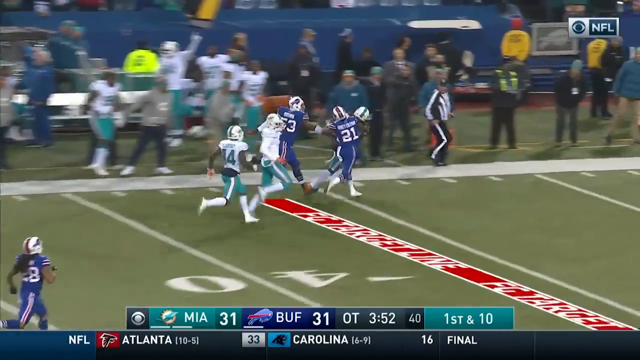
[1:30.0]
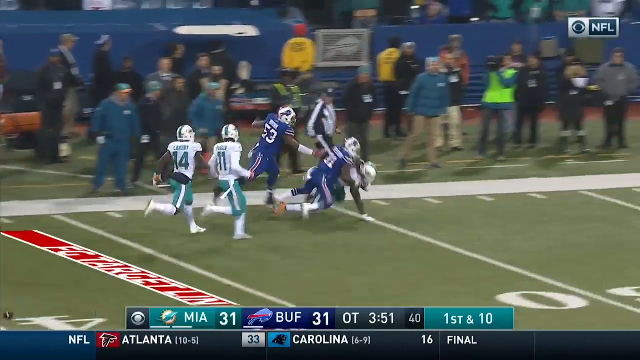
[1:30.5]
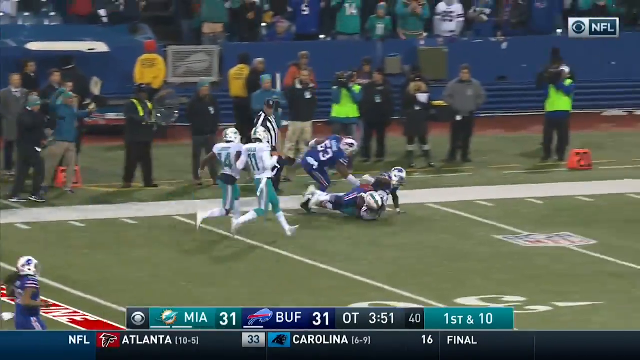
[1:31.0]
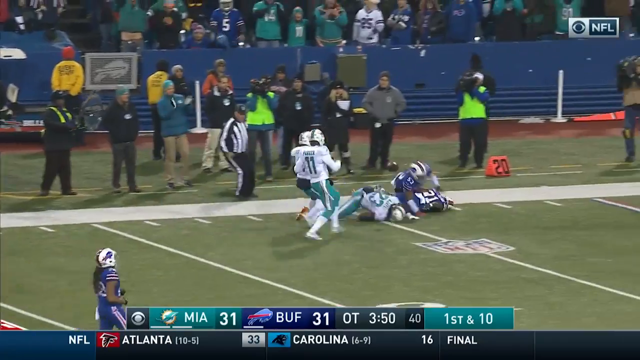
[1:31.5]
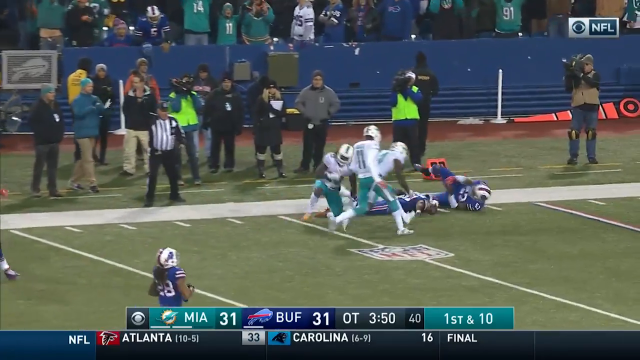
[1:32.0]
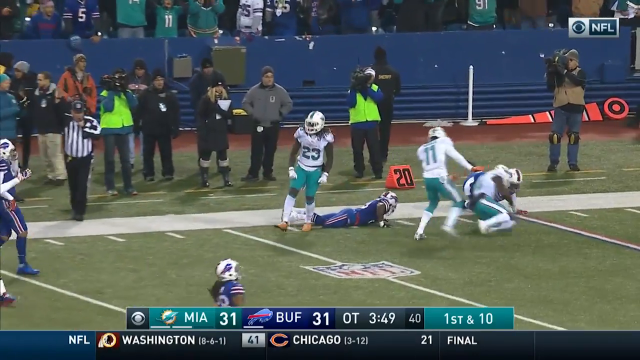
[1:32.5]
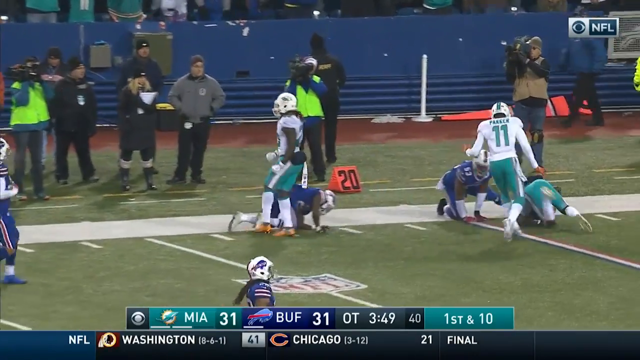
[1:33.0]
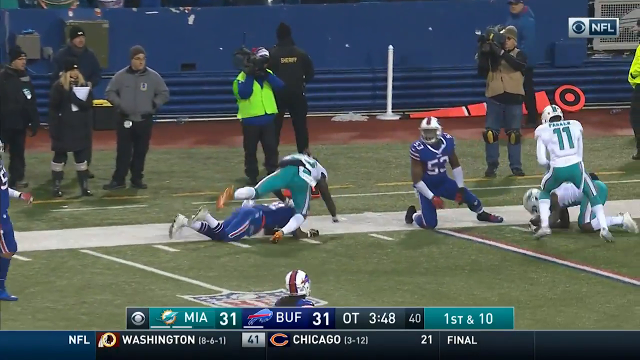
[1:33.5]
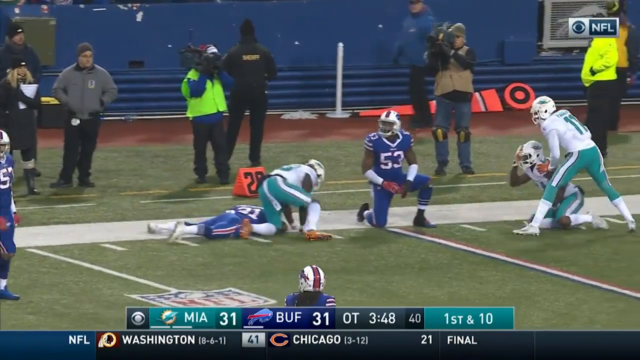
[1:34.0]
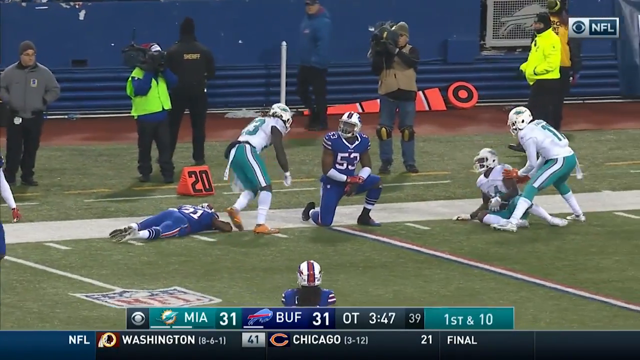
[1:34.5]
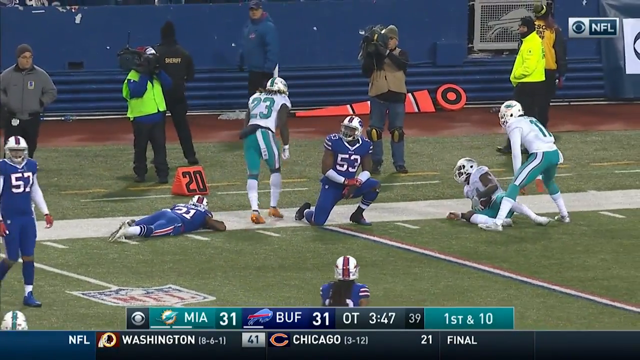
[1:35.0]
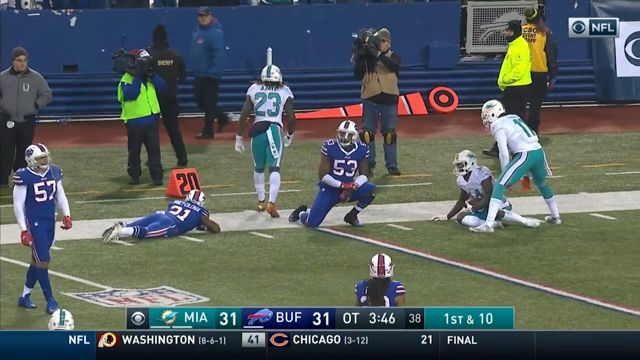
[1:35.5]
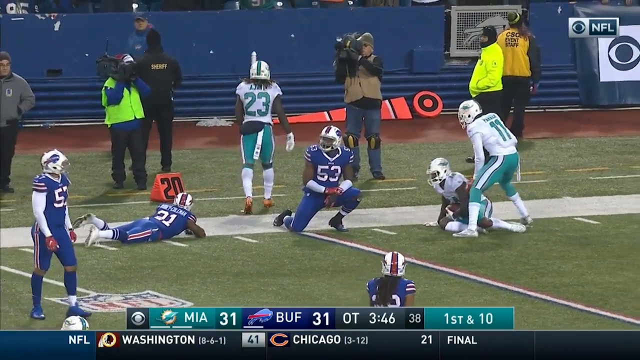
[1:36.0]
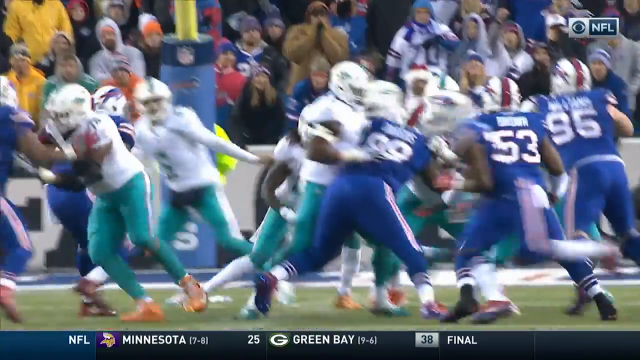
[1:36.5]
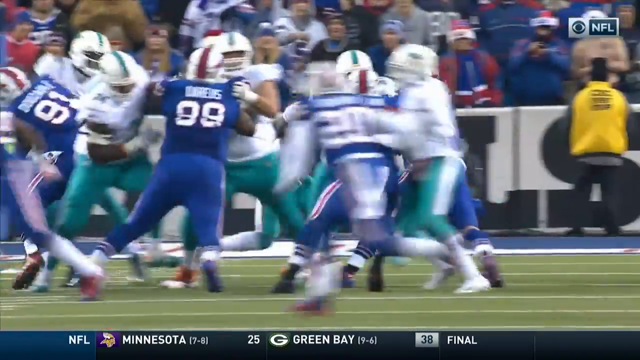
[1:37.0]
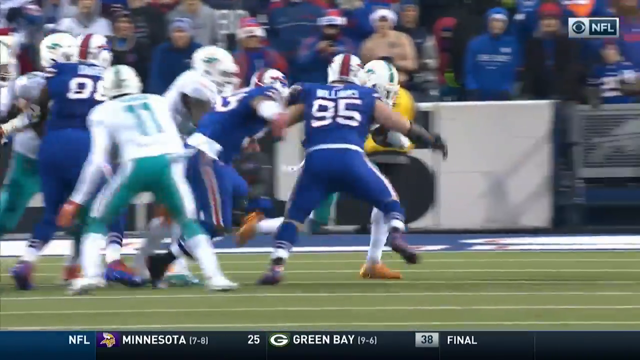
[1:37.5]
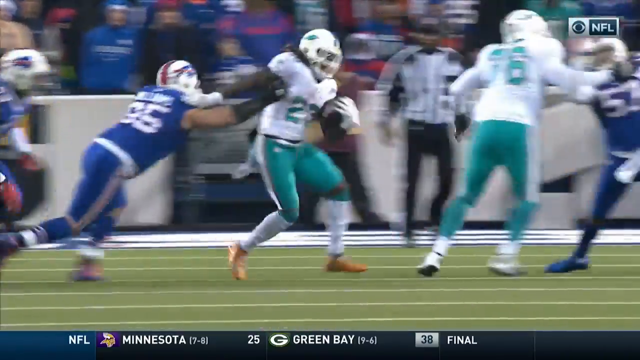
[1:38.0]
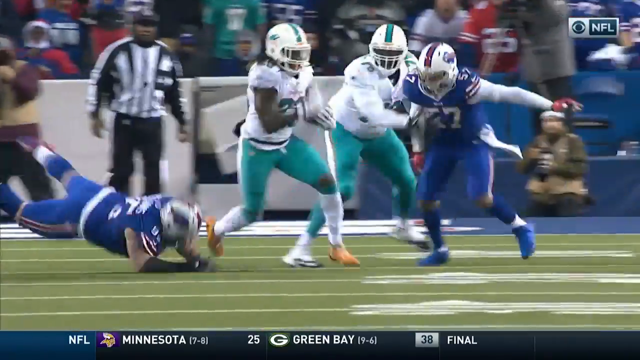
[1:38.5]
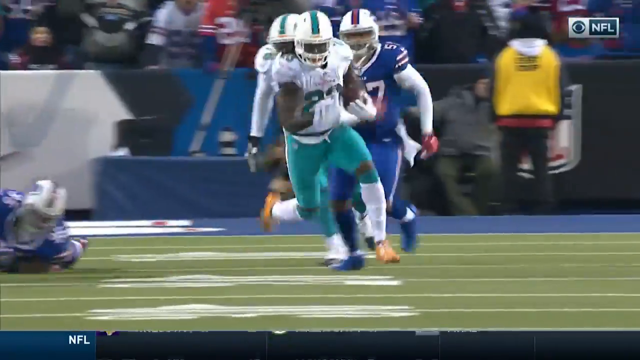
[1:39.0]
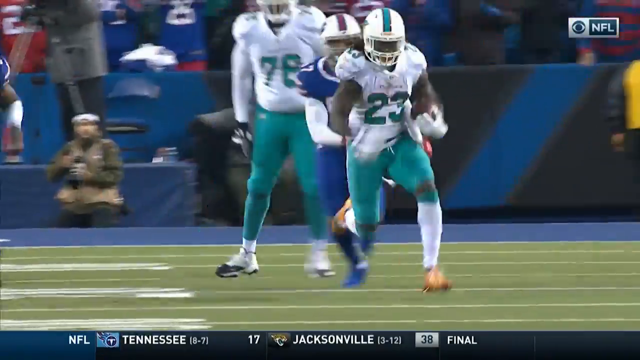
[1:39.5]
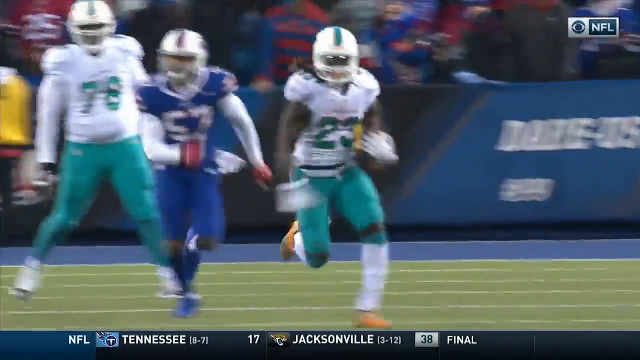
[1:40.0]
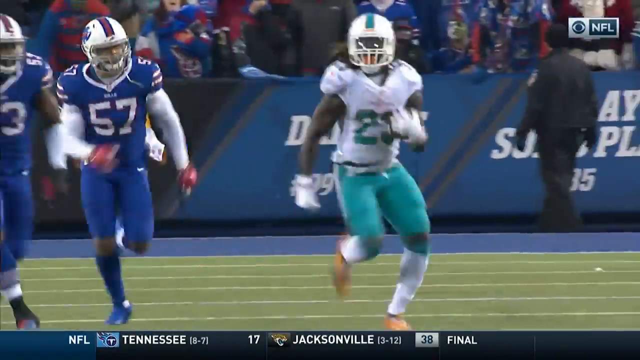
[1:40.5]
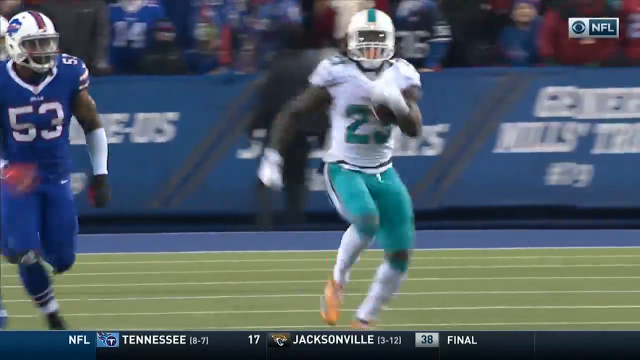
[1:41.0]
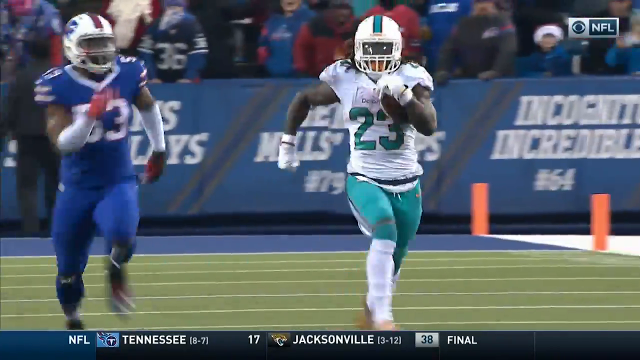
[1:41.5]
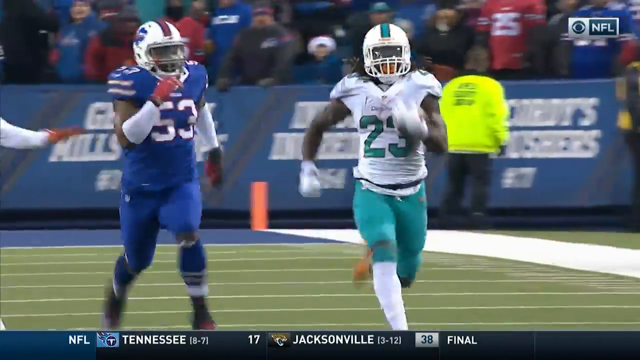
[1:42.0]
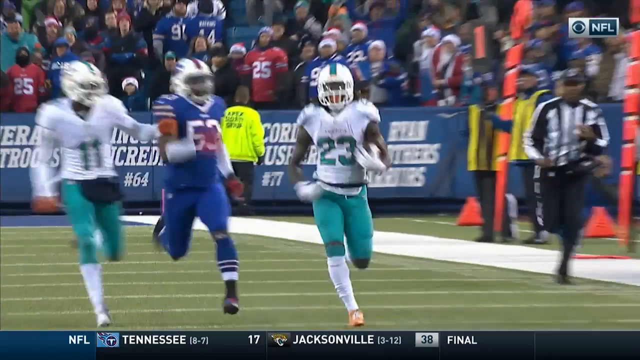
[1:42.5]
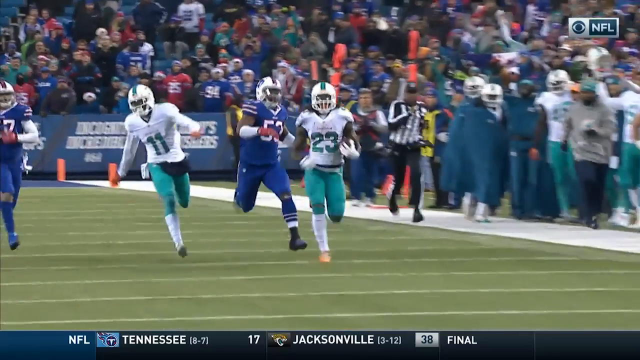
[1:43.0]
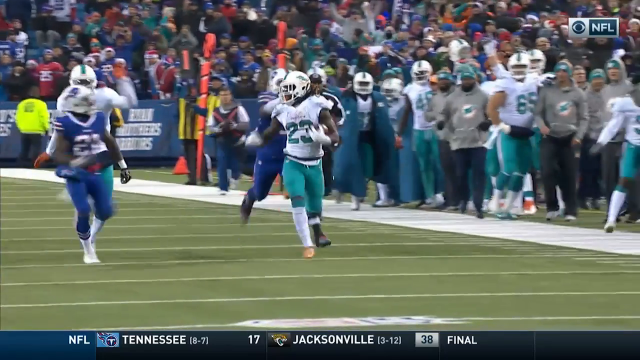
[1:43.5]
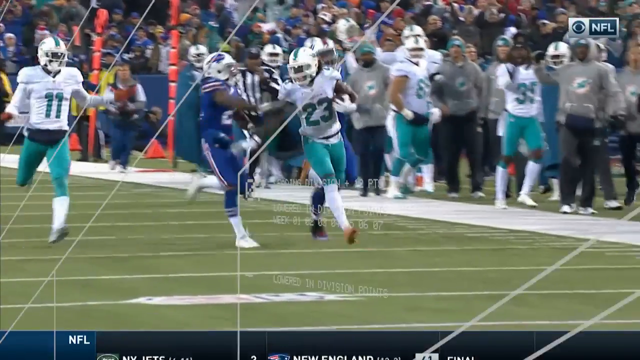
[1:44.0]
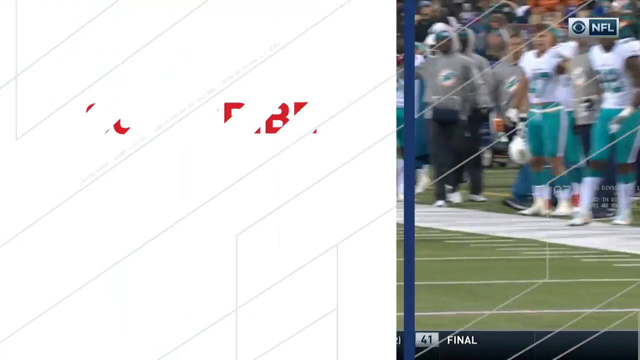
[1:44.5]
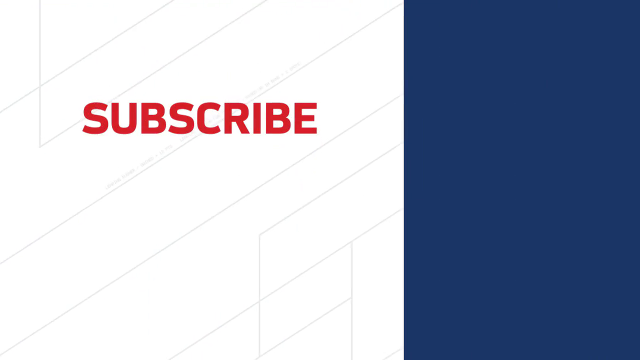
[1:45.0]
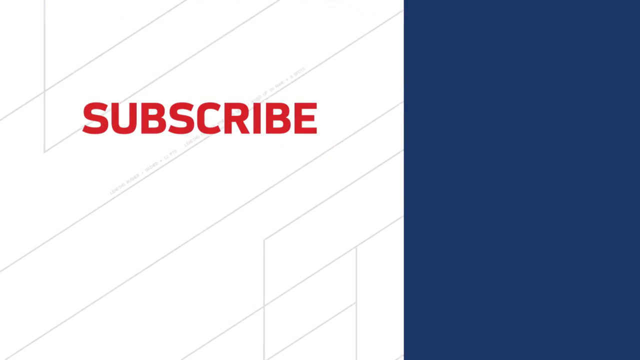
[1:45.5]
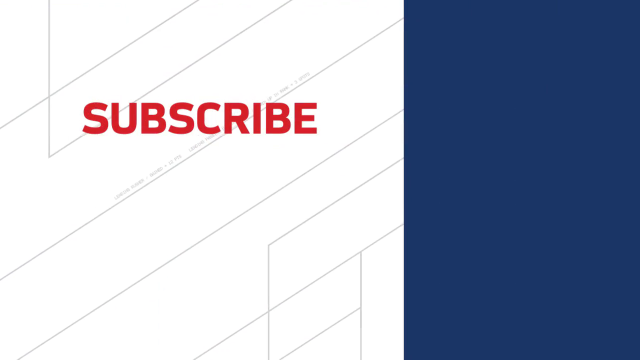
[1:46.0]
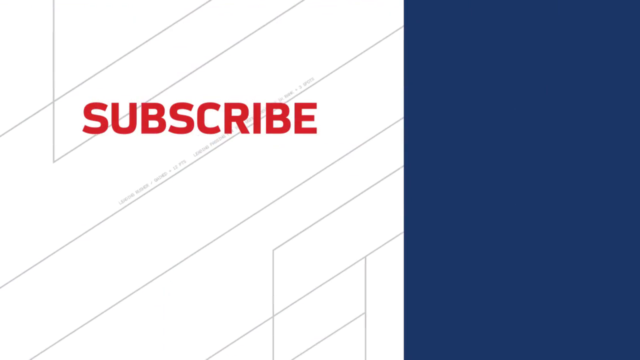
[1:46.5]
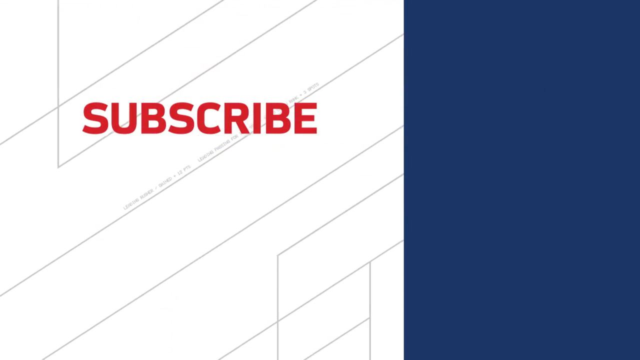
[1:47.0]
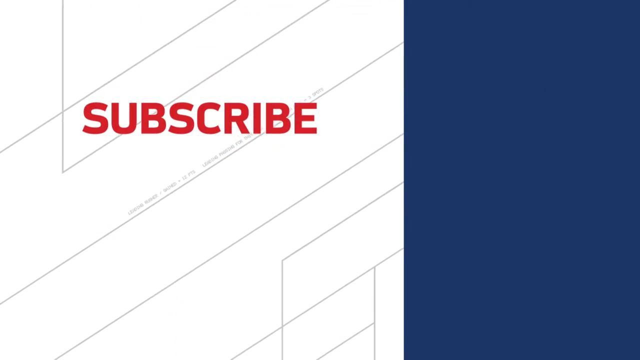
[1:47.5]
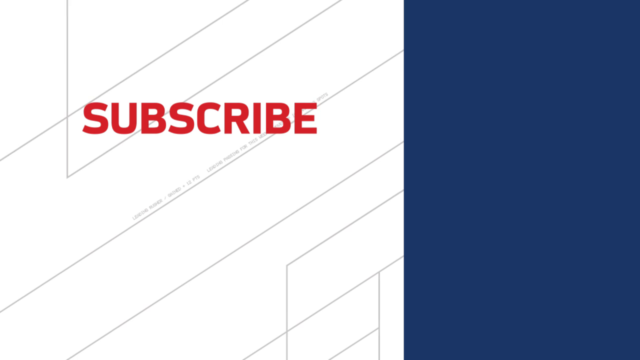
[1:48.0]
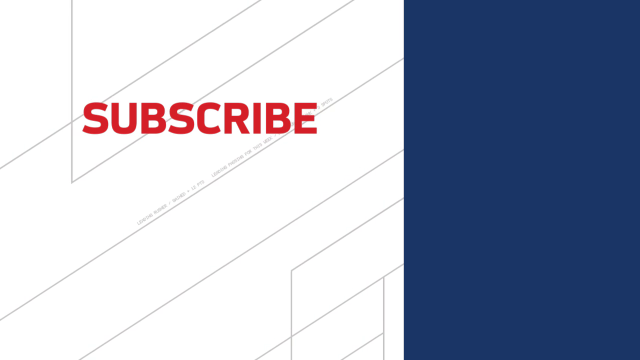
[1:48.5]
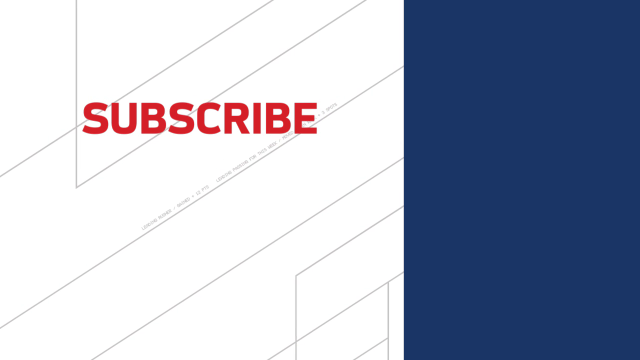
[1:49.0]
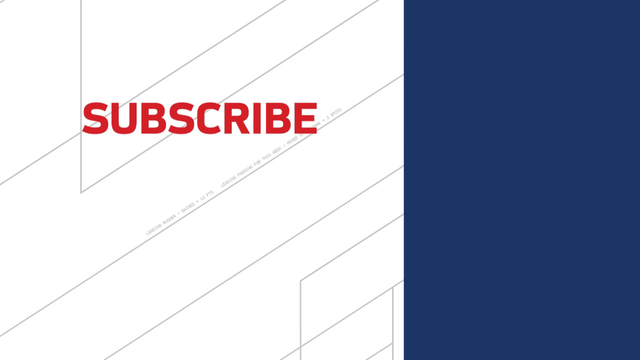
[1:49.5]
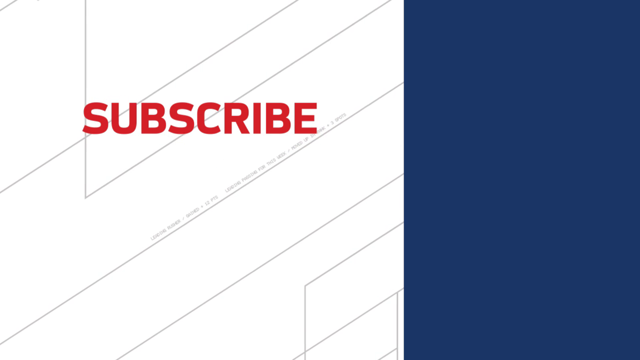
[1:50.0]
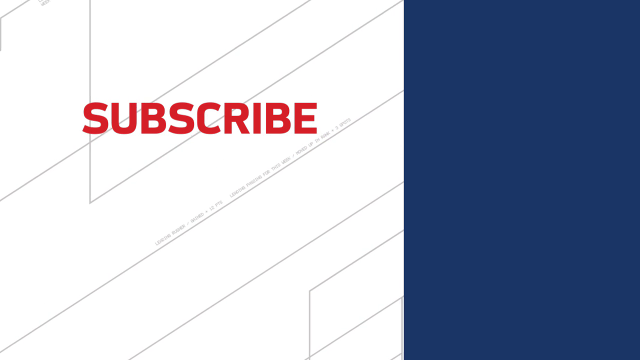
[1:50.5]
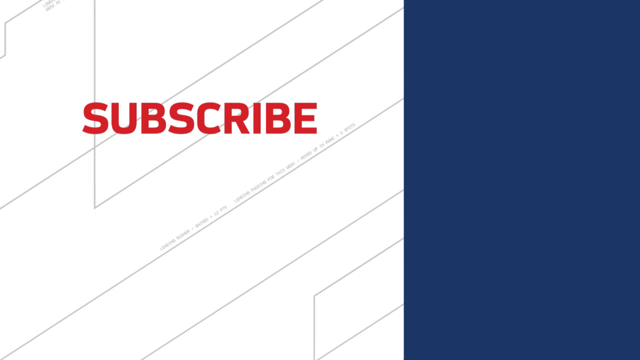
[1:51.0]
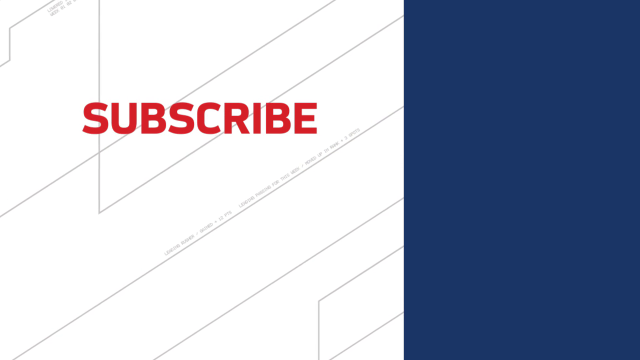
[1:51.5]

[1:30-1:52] The game between the Miami Dolphins and the Buffalo Bills is being played in Buffalo; it looks quite dark, and the lights seem to be on. Miami wears a predominantly white uniform and Buffalo is in blue. A Miami player who has run along the sideline is tackled by a Buffalo defender after quite a long run. The Miami player gets up and celebrates; there is a cameraman behind them, accidentally tripped on a Buffalo defender, and they walk out of bounds. A replay from a different angle, behind the defense, shows number 23 running with the ball tucked under the left arm, a Buffalo defender right behind him, and another coming from the side to tackle him. The highlights end, and the word "SUBSCRIBE" appears in red on a white background, with a blue background to the right.